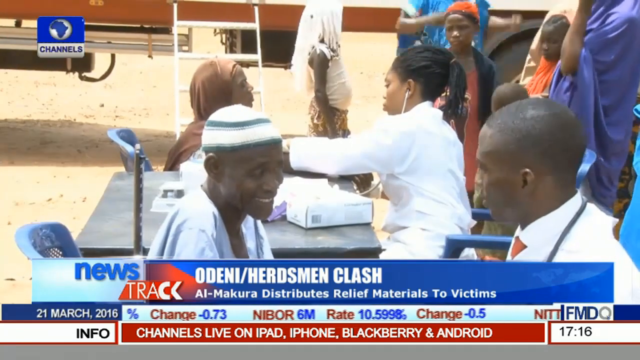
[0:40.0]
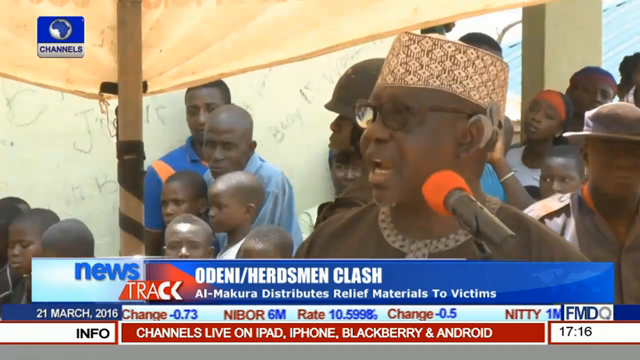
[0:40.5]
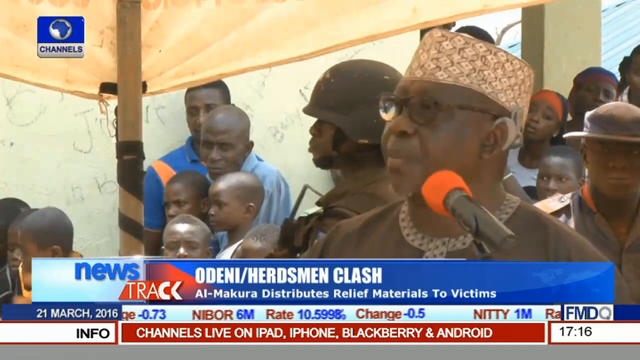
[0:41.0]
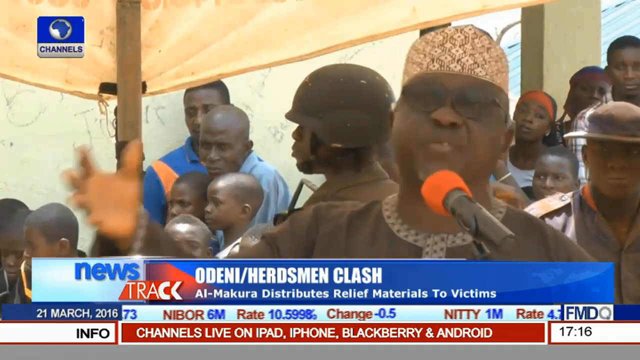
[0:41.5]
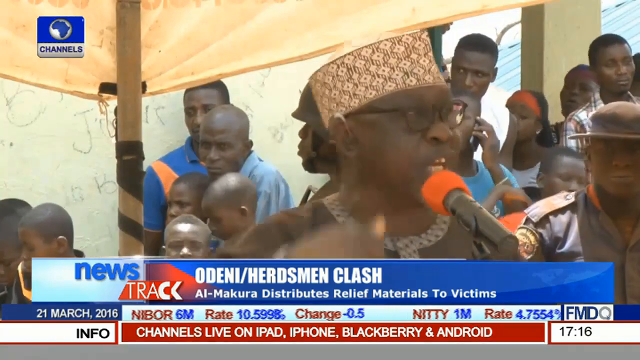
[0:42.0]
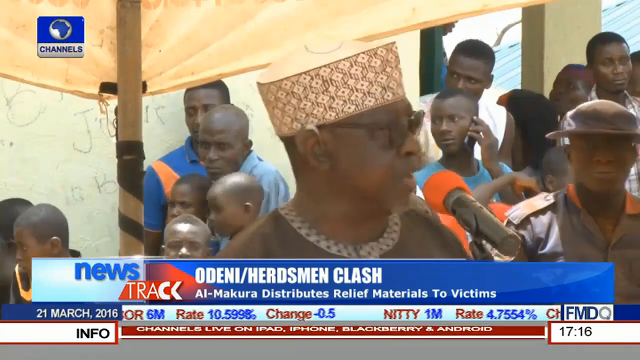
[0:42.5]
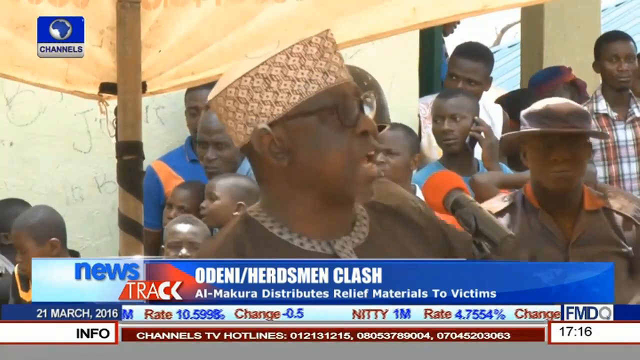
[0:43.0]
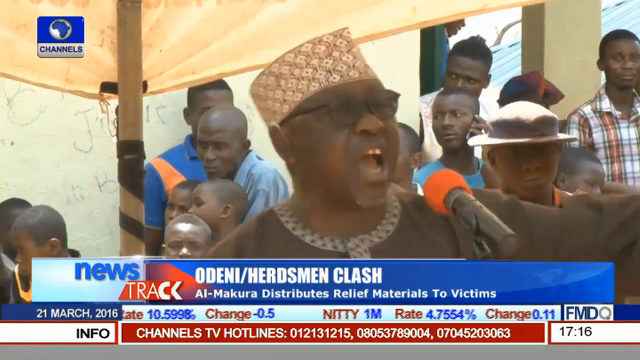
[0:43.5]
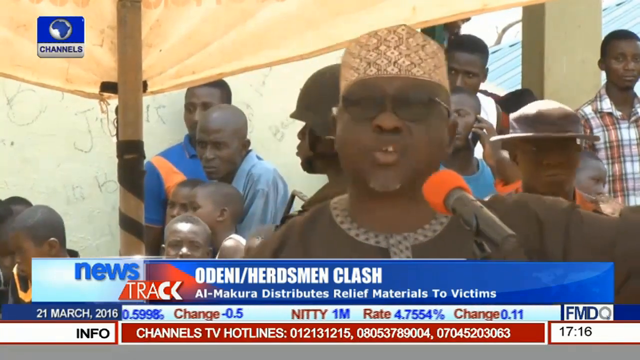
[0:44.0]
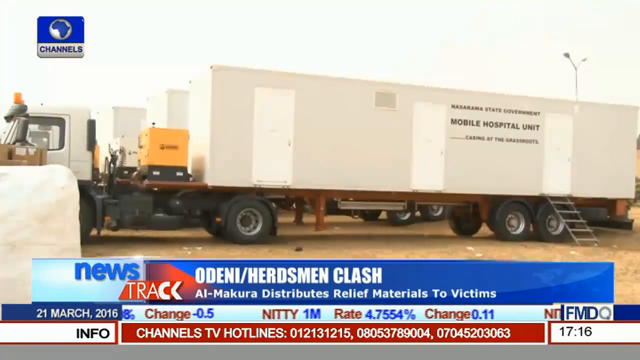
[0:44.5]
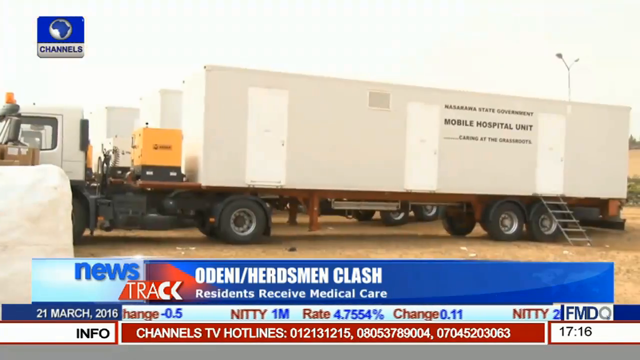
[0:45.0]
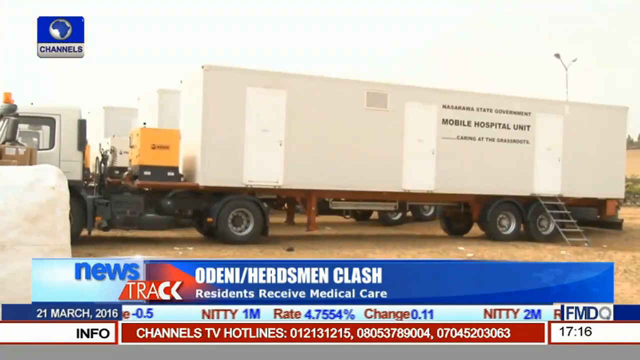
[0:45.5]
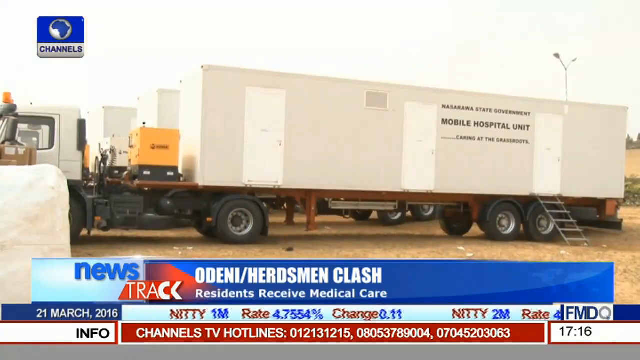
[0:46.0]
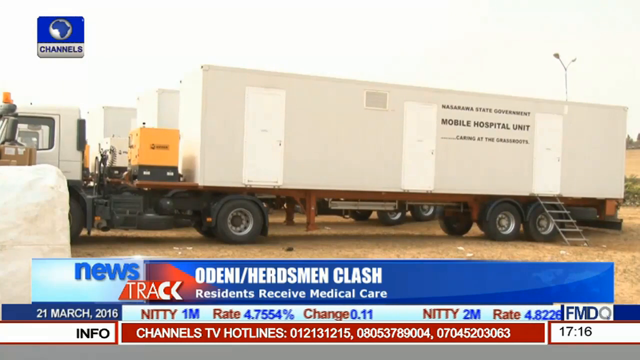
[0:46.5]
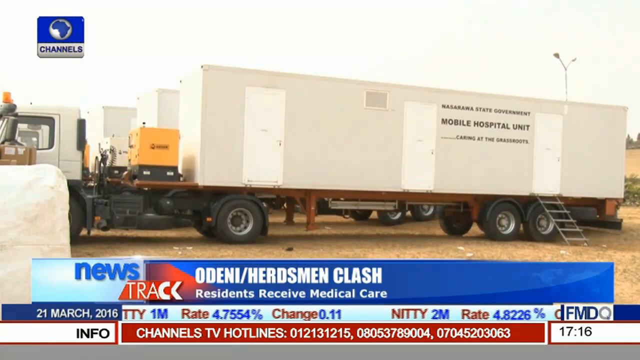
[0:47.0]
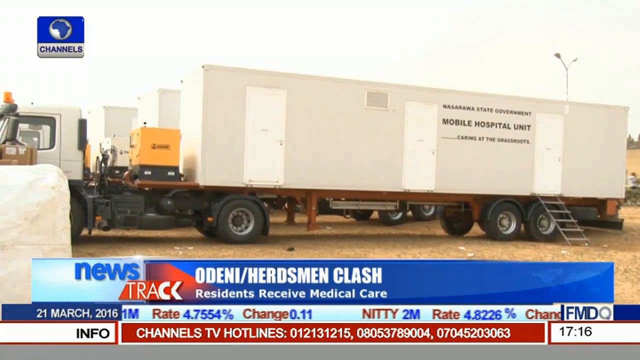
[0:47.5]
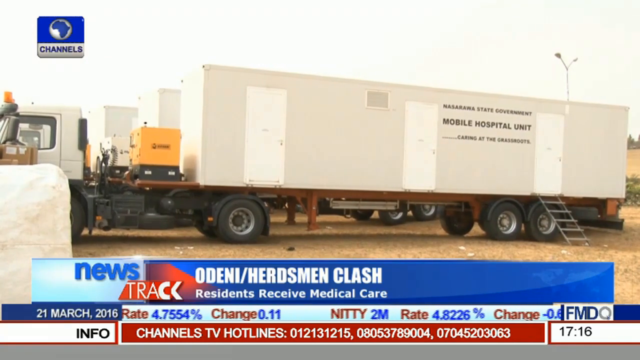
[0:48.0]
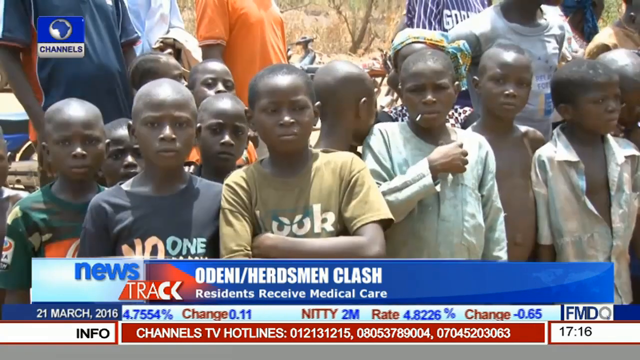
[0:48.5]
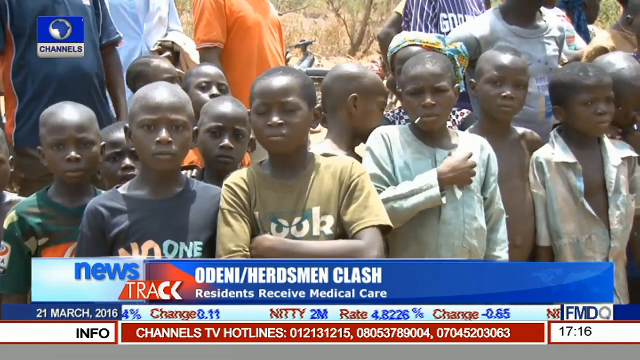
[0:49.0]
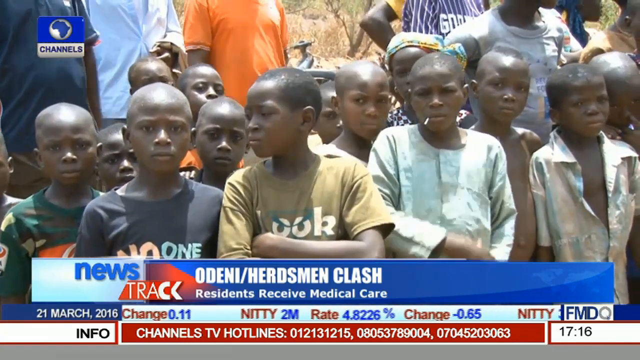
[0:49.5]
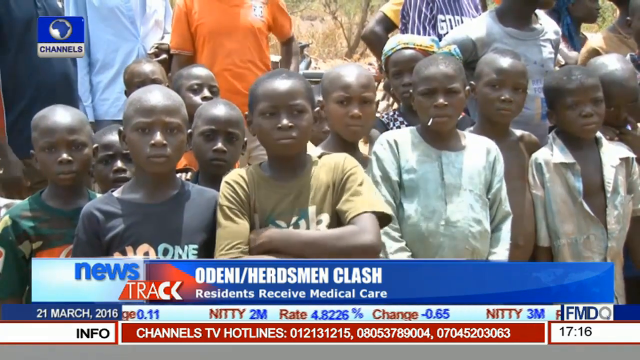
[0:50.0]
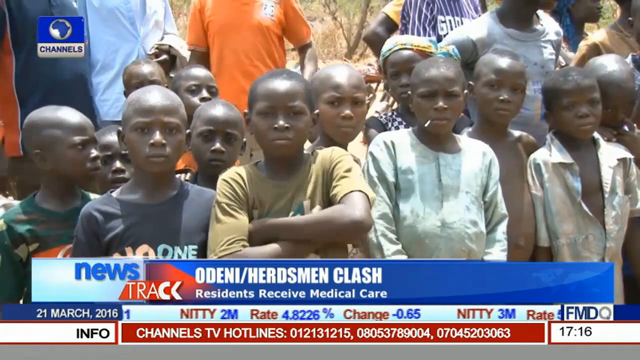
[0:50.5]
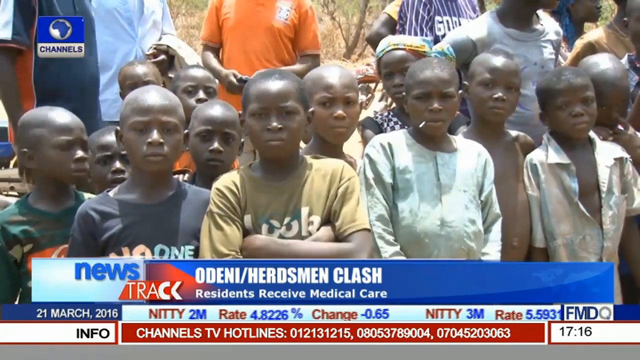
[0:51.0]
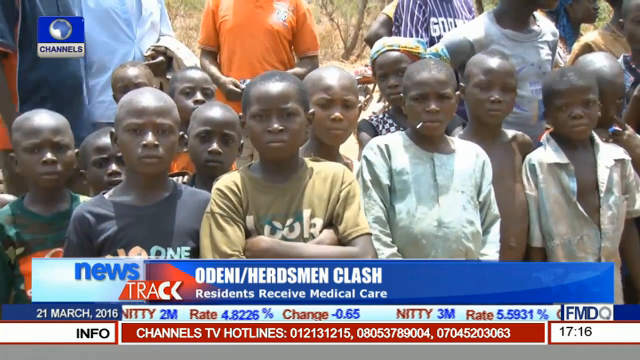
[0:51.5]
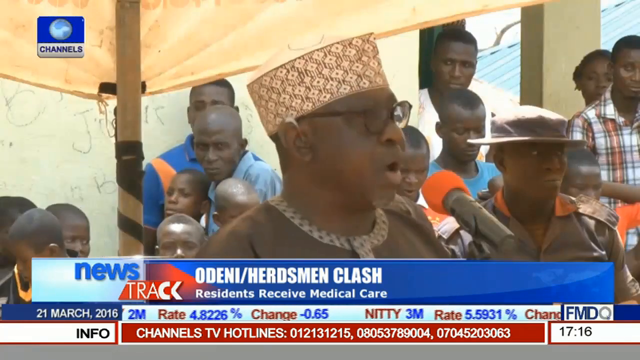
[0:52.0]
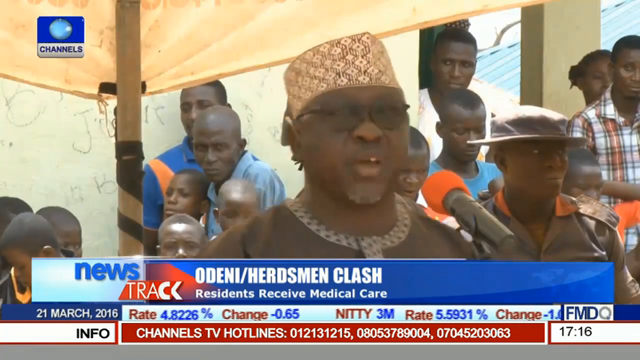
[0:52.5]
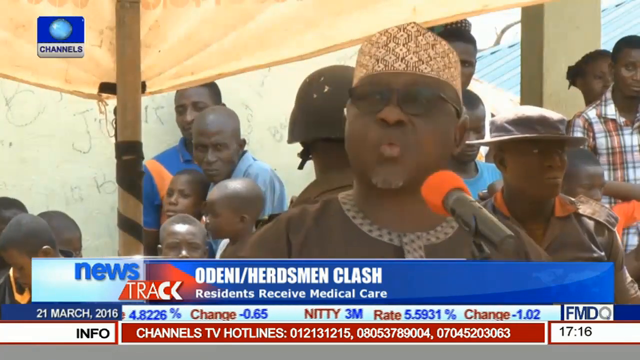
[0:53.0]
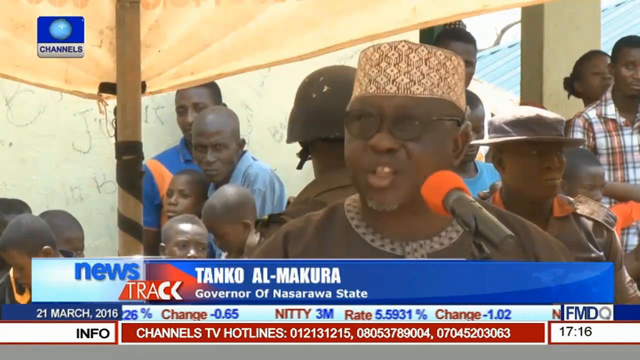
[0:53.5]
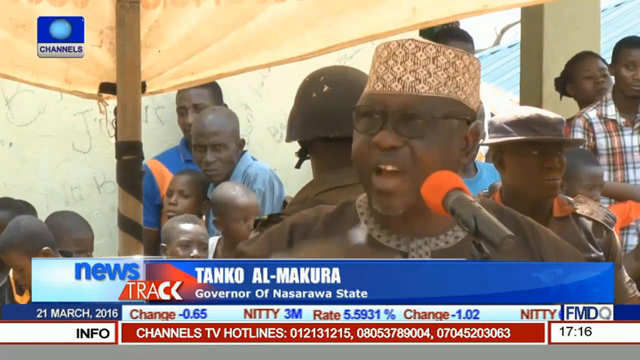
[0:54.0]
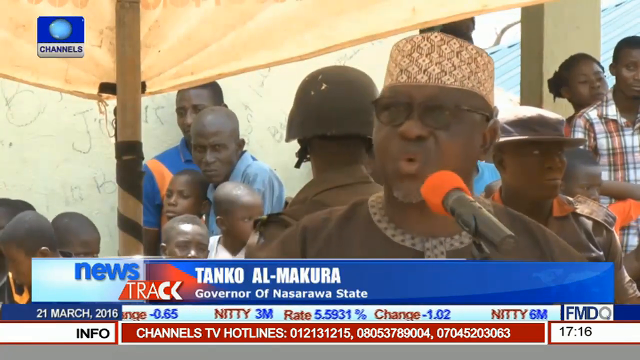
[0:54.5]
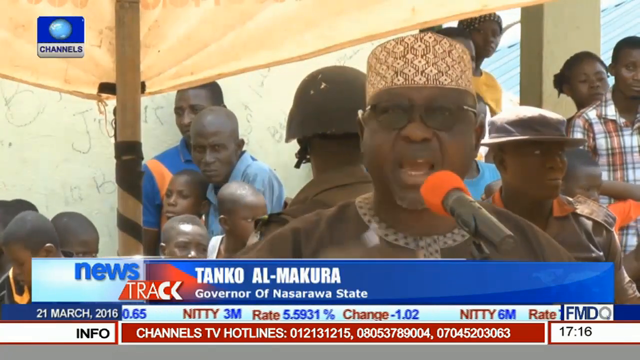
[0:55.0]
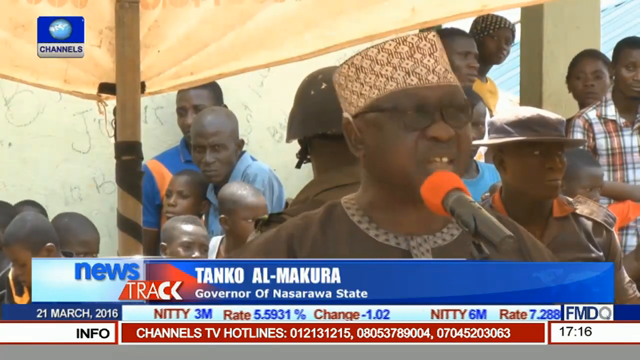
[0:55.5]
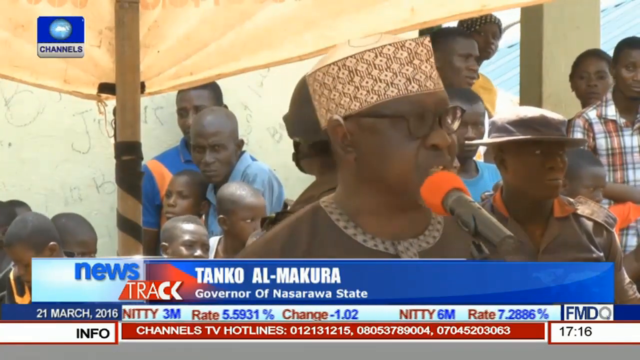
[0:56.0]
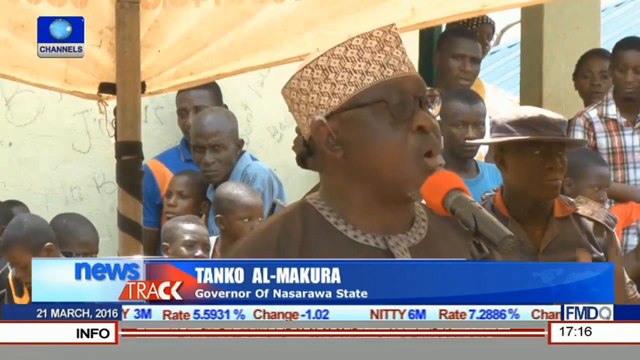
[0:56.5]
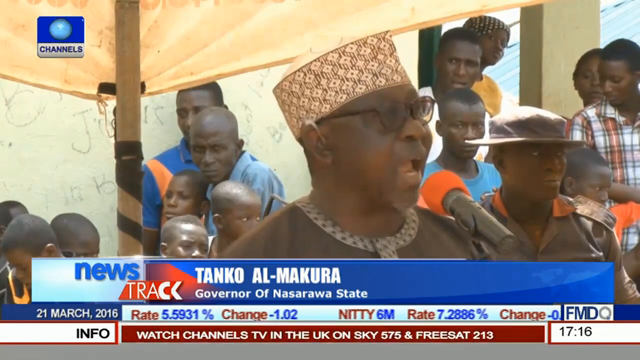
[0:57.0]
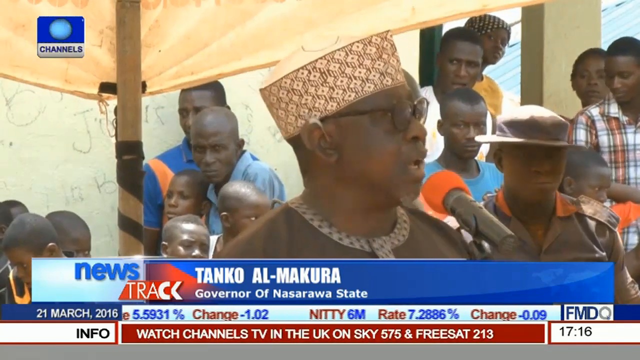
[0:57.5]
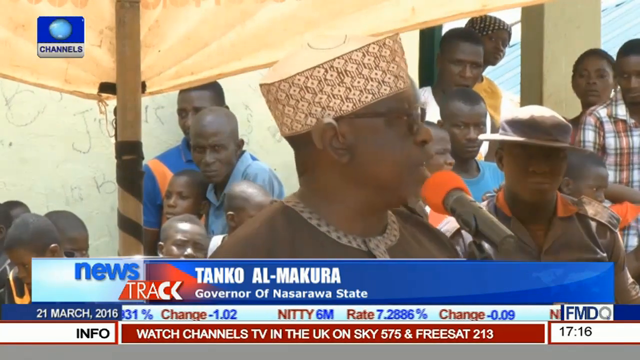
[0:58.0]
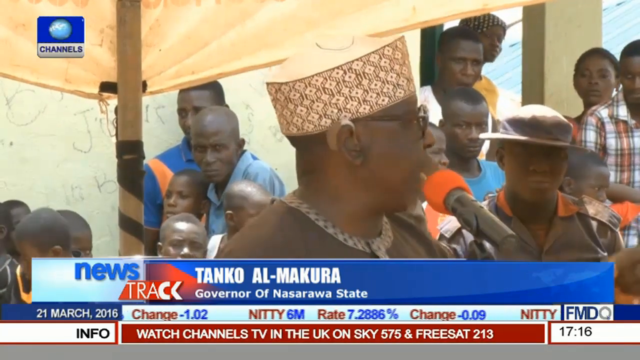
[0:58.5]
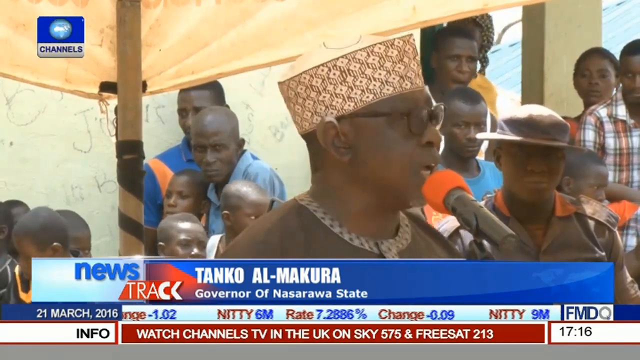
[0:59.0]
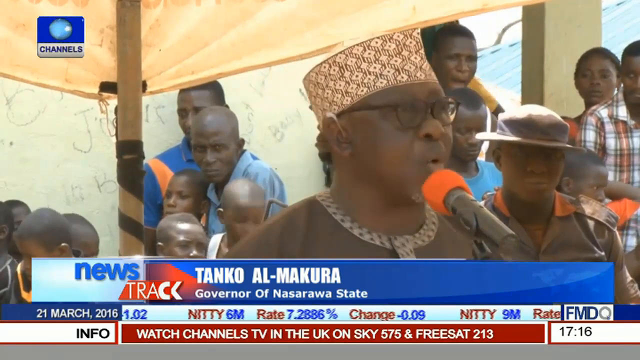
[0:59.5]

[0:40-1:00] A person wears a white hat, someone else appears to have a headdress on, and two people in doctor's type coats appear to be checking those people's vitals. Then someone speaks into a microphone with people behind them. A man who appears to be wearing an army helmet raises both of his hands as he gestures to the crowd. A truck with a mobile hospital unit appears; it looks like it has three doors. A group of young children is at the front of a crowd, with adults standing behind them, some with their arms crossed. The shot returns to the man at the microphone, who speaks and gestures with his right arm as people look on, kind of waving it in a circular motion in the air. He raises his left arm as he looks back at everyone watching, then turns back to the front, his eyes kind of meeting the camera.